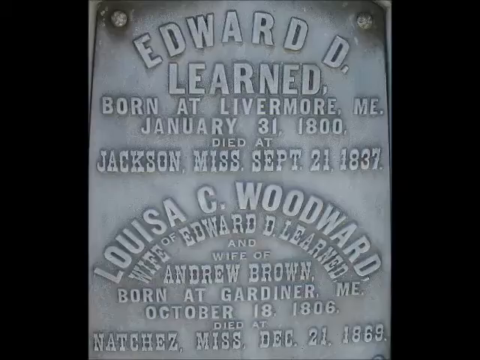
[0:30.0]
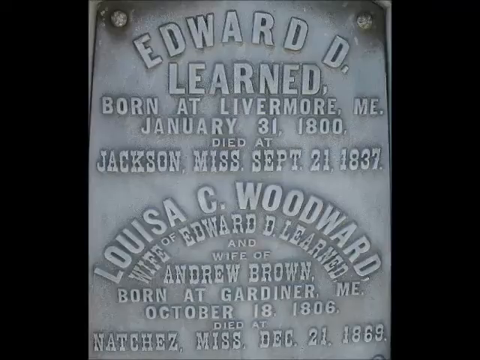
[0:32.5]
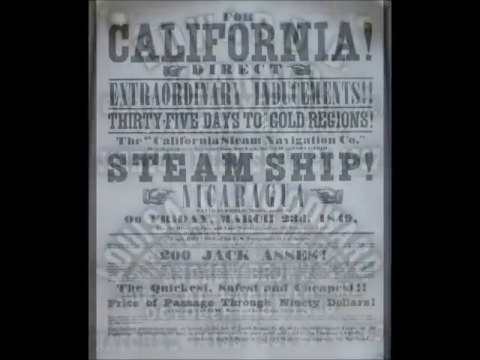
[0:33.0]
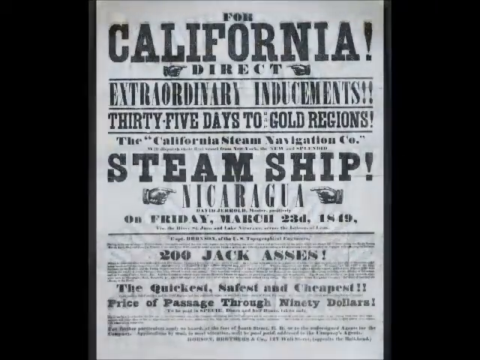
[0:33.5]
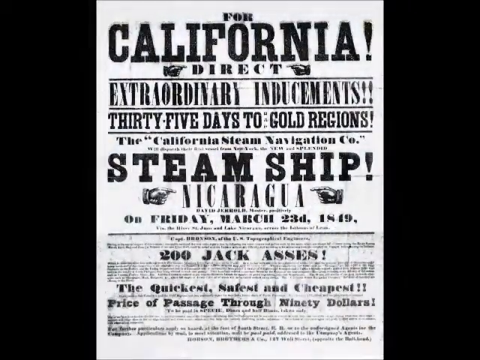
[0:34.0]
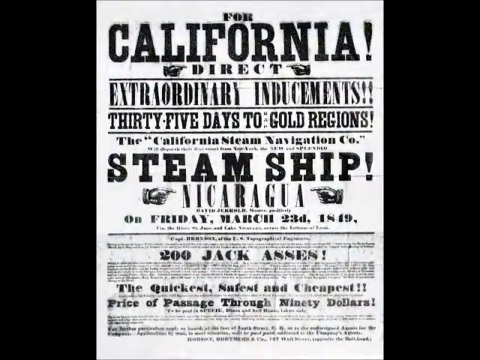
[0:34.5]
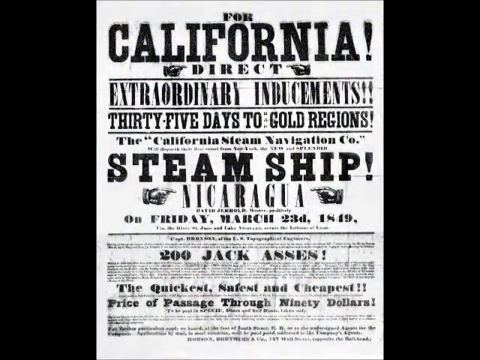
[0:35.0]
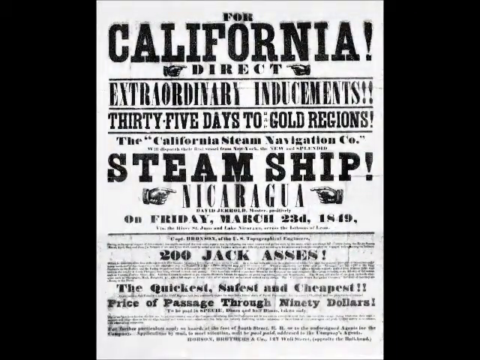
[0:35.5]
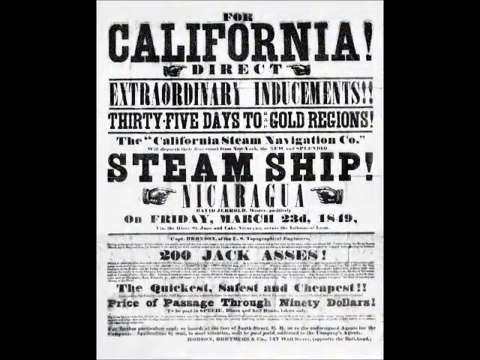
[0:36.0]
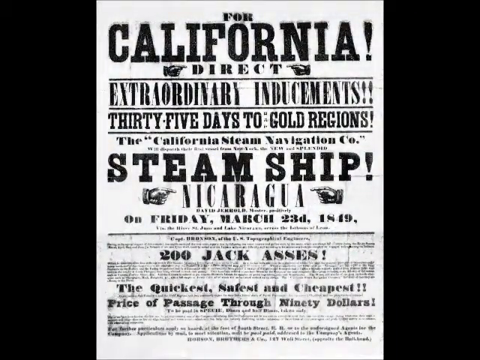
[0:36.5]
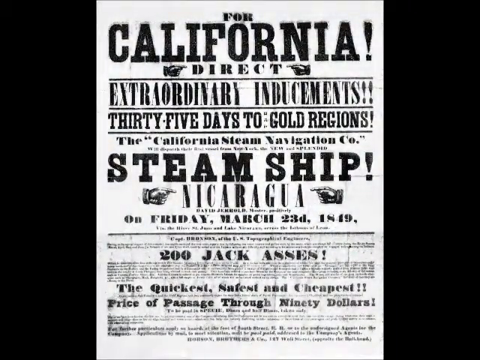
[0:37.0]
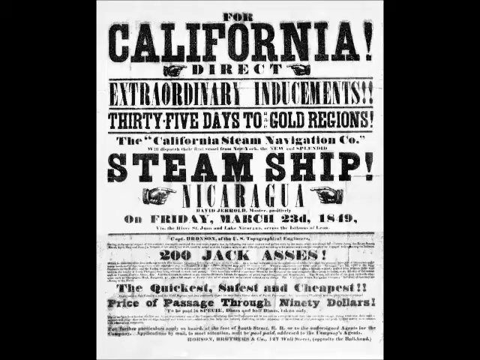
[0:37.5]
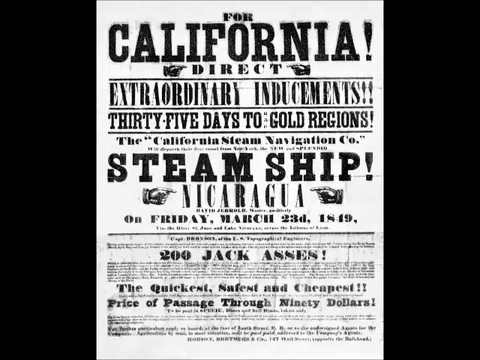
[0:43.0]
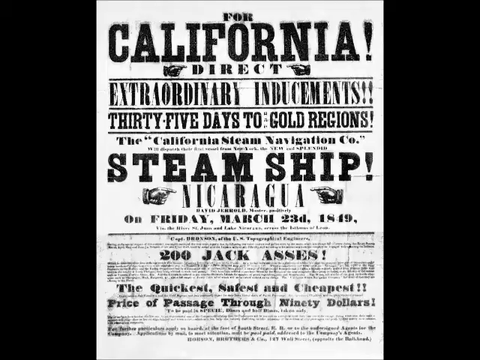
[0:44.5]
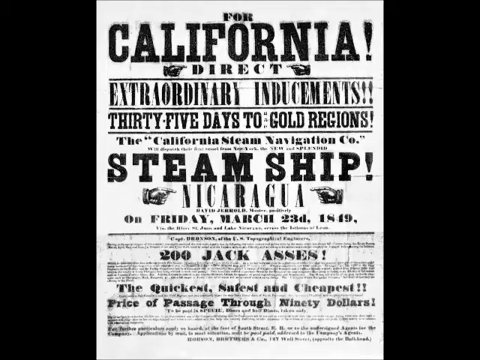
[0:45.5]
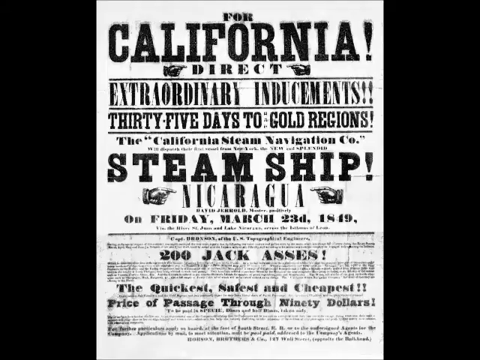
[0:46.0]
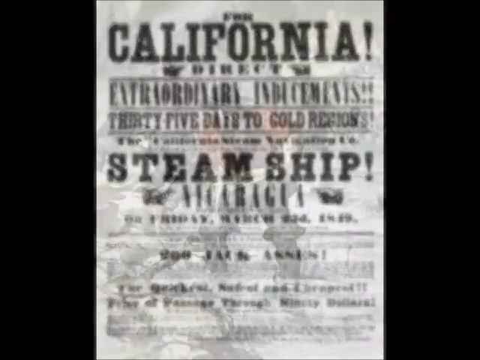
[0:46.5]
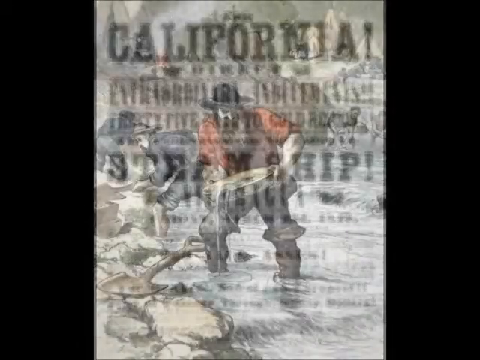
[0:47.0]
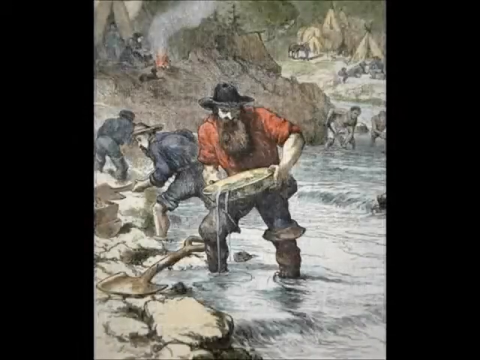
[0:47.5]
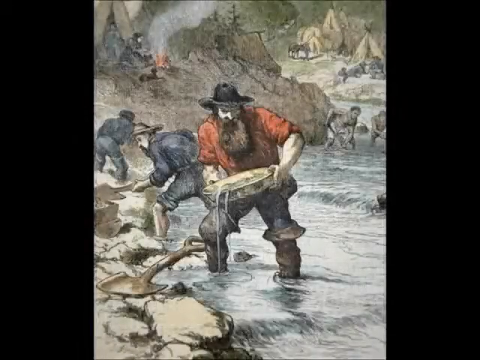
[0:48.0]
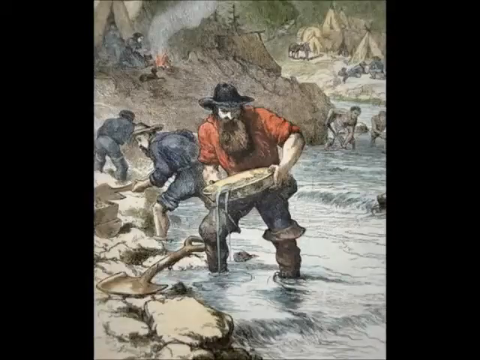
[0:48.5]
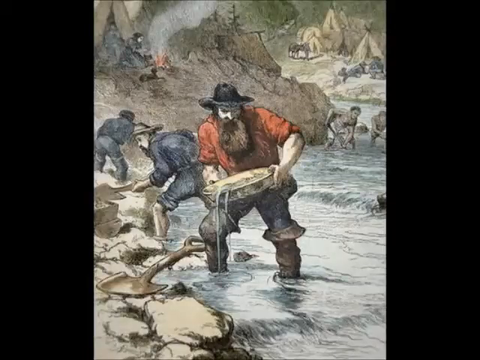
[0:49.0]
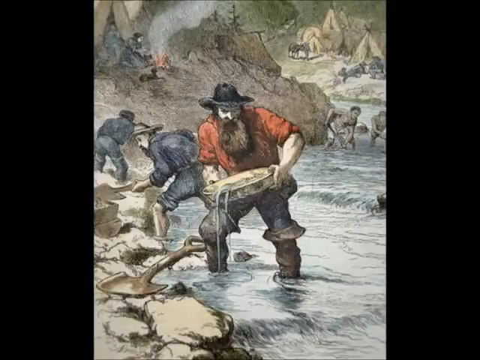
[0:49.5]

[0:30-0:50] A placard, or possibly a kind of headstone, of Edward D. Learned shows that he was born in Livermore, Maine on January 31st, 1800 and died in Jackson, Mississippi on September 21st, 1837. Another name follows, apparently his wife, Louisia C. Woodward, born in Gardner, Maine on October 18, 1806 and died in Natchez, Mississippi on December 21st, 1869. Next is another clipping about steamships; it looks like a flyer, probably not a newspaper, mentioning California, direct, and "35 days to the gold regions." Then a cartoonish image shows a man panning for gold with a big gold pan. He wears a red shirt with the sleeves rolled up, a black hat and boots, and has a full beard that comes all the way down to his chest. A shovel is next to him as he lifts what looks like gold-rich dirt out of the stream while panning. Behind him some men are digging, and a lady is behind him as well who looks like she has started a fire. Farther behind him is a campsite with horses and other men, apparently working this mine site.